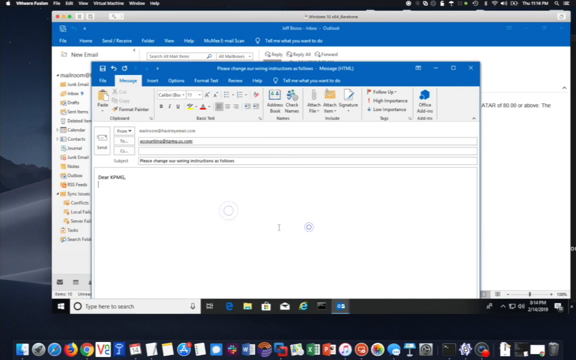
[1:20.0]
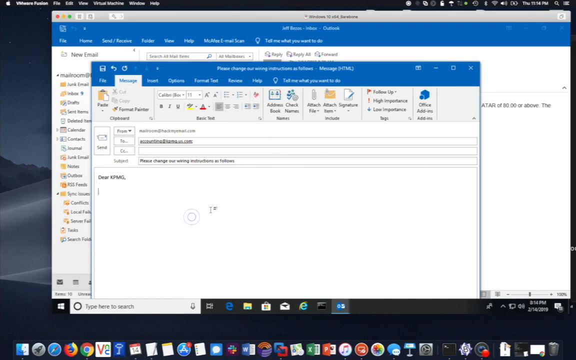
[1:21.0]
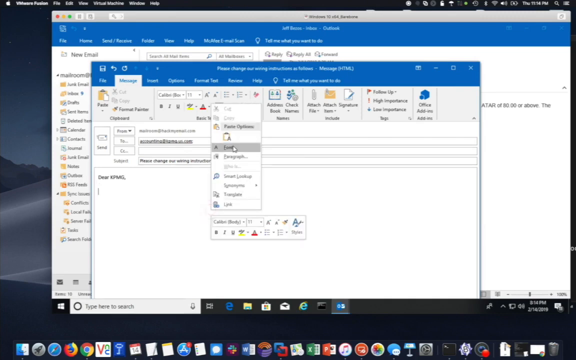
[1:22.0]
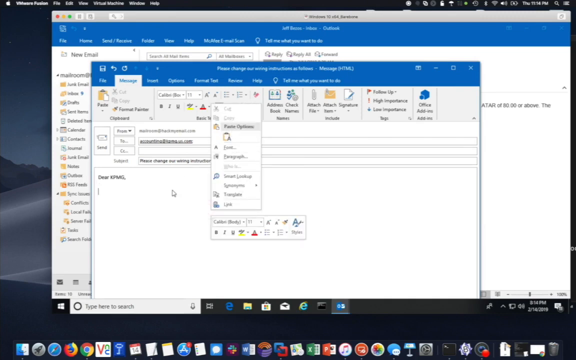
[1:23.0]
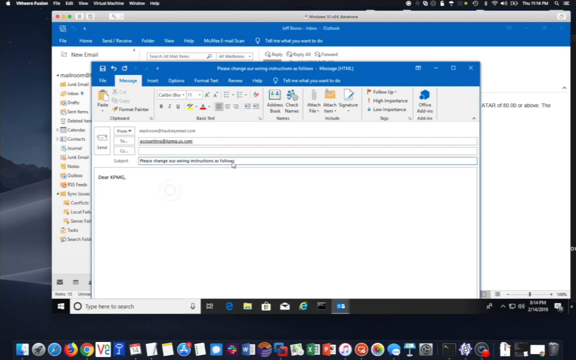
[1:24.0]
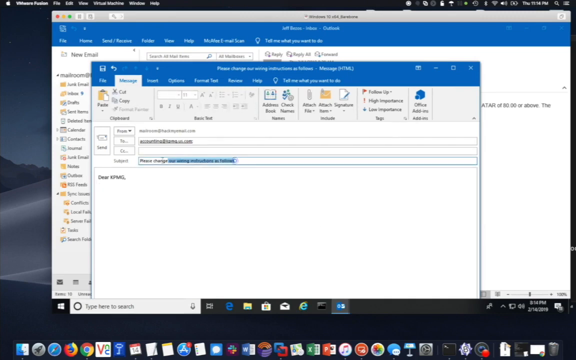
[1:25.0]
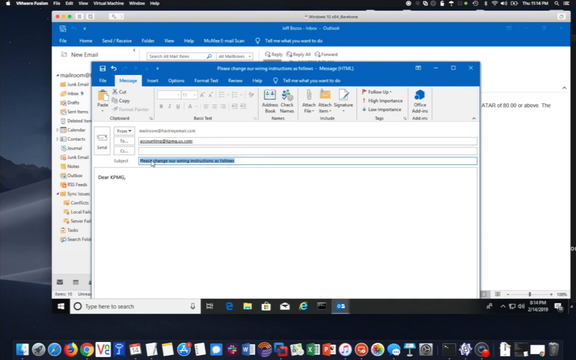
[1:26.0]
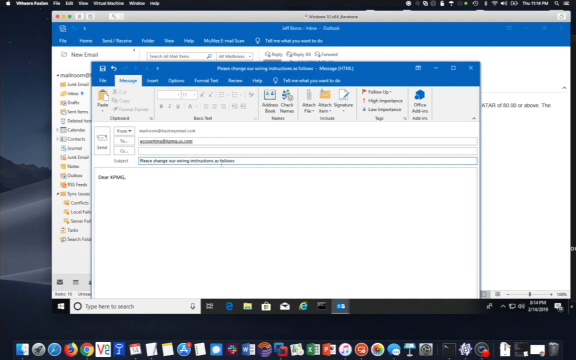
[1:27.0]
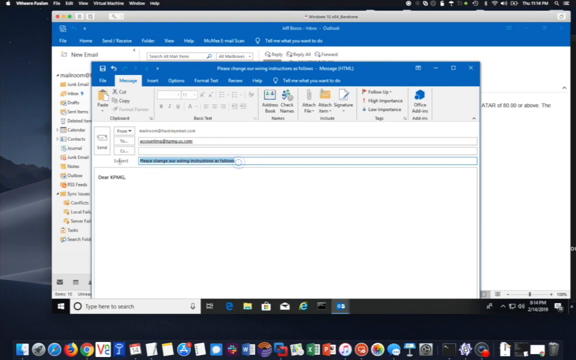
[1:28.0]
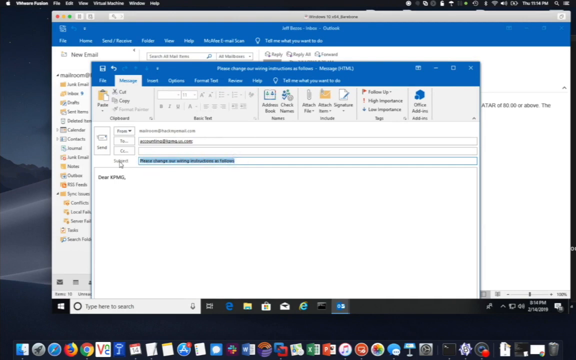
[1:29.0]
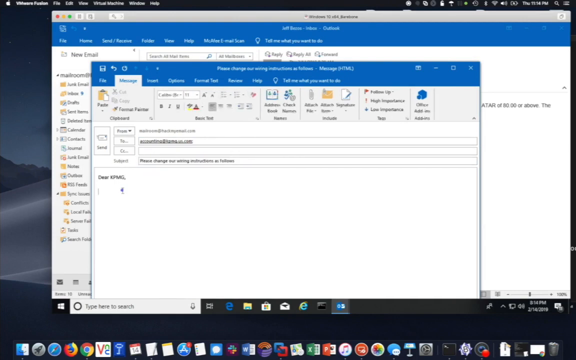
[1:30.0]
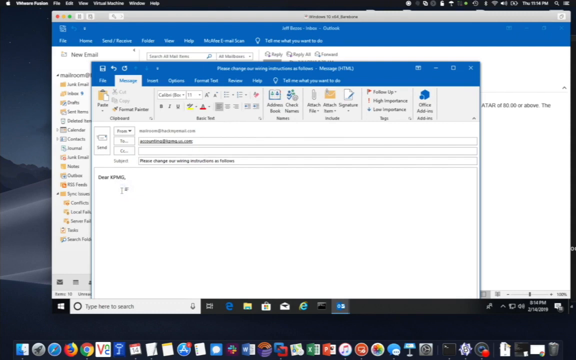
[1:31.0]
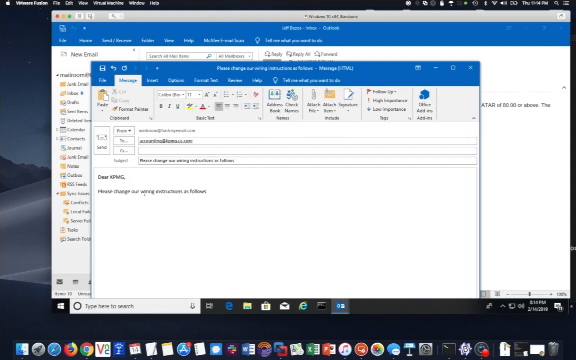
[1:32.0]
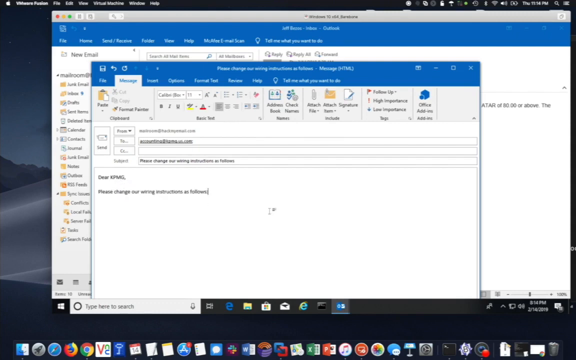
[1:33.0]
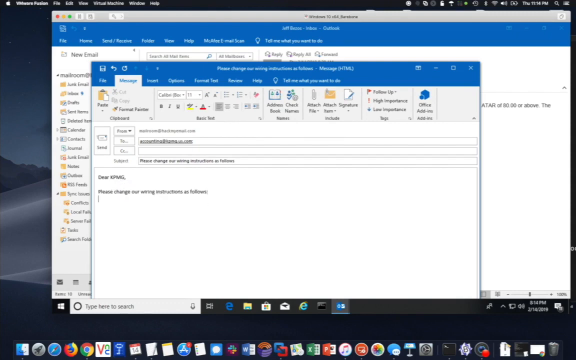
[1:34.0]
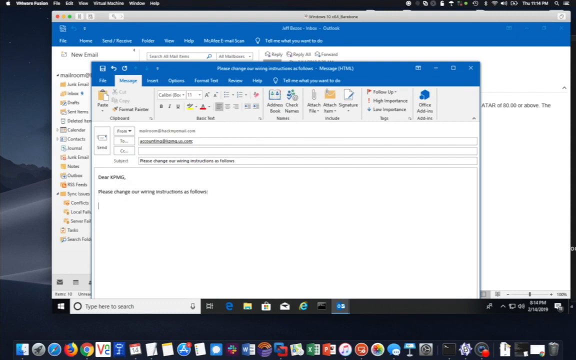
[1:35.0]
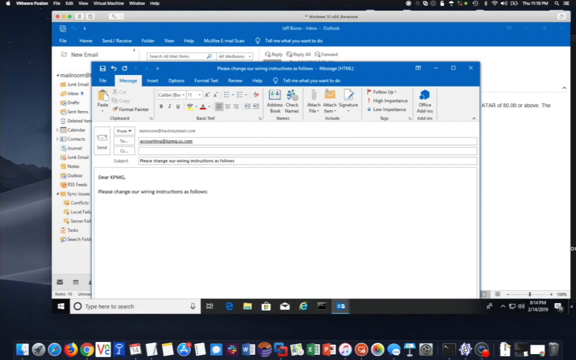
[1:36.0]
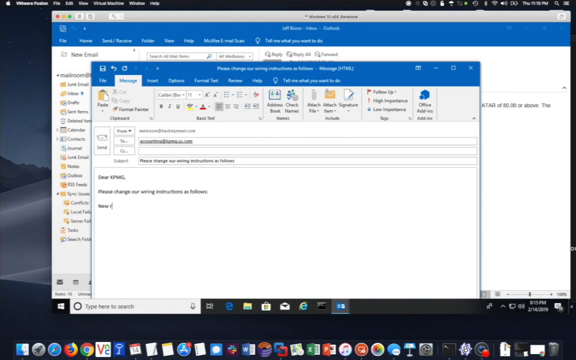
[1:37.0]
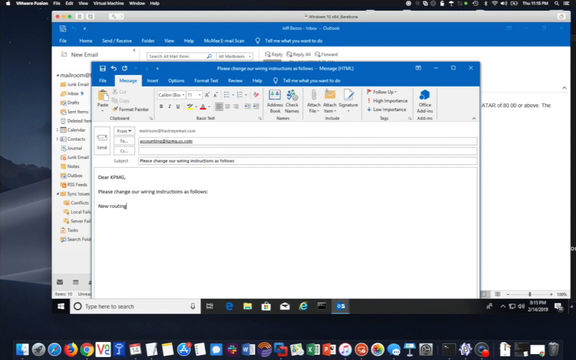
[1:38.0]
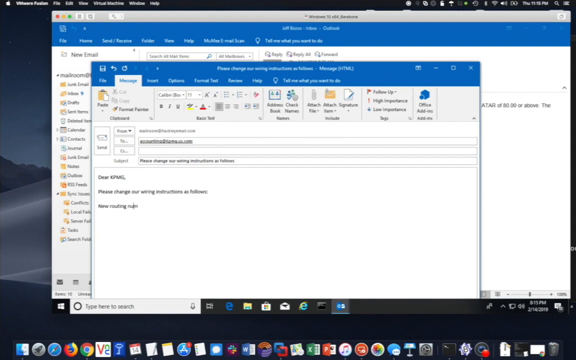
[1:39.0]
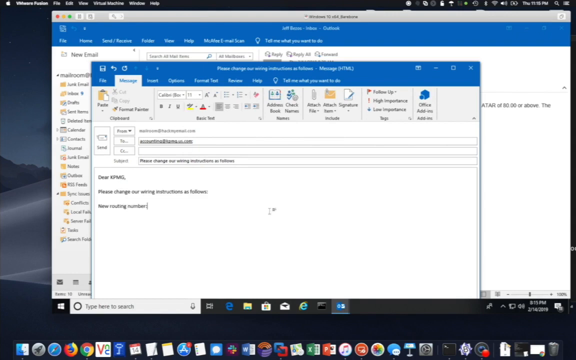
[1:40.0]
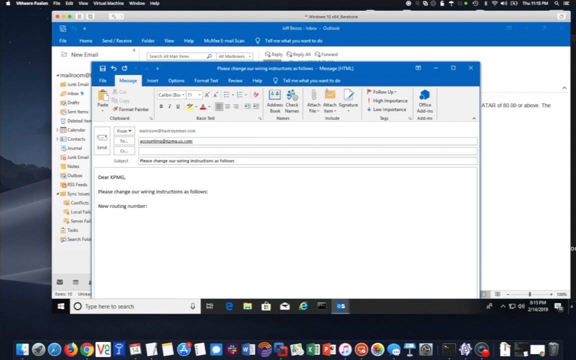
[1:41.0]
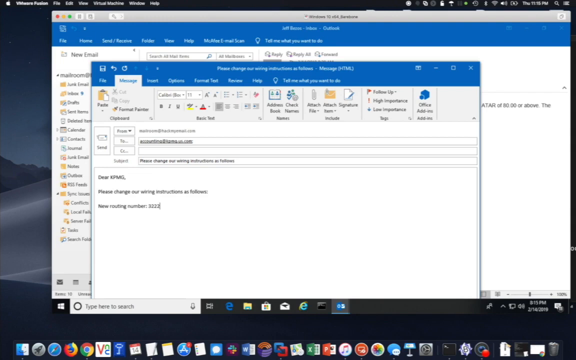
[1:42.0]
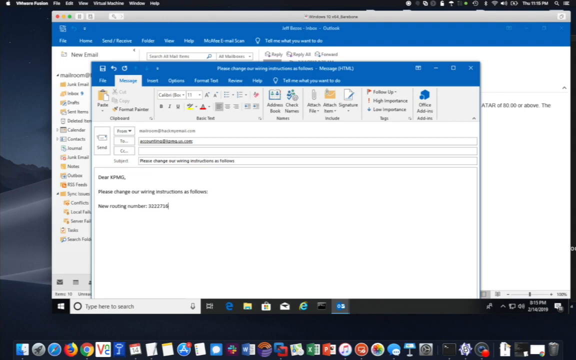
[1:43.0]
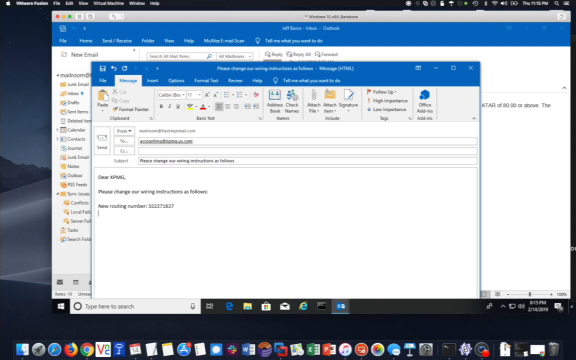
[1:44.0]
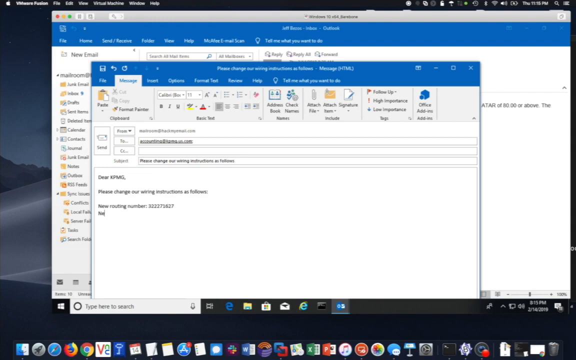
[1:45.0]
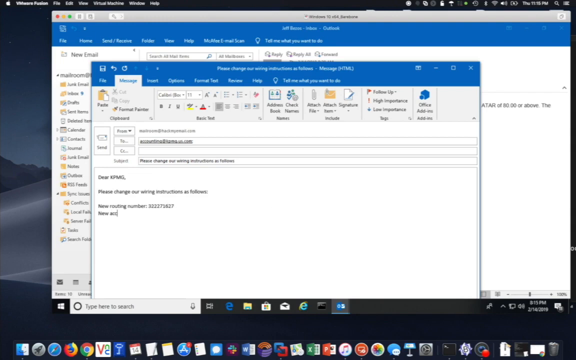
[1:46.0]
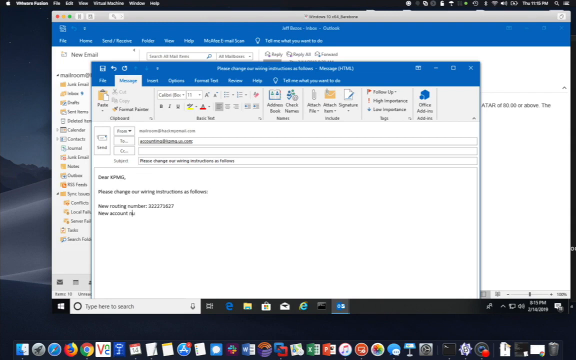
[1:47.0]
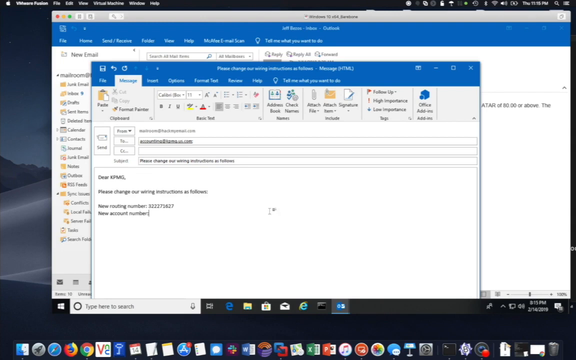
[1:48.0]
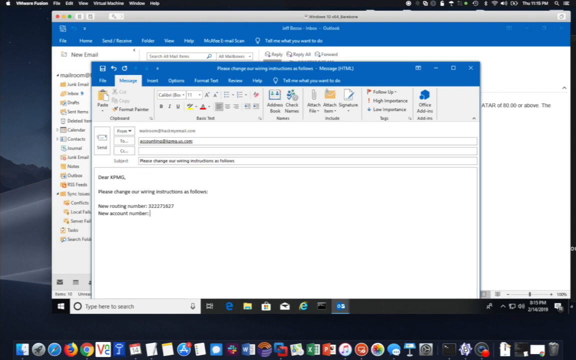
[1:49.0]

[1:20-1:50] Two pages are open on a computer screen: an email homepage and a message page for writing an email. Someone selects items from a drop-down menu and appears to click a clipboard icon in the middle of that menu. They highlight the text in the subject box, and this text is copied into the message text box. They continue typing a message below it. The text is a bit blurry, but the first line looks like "new routing number" followed by a series of numbers, and below that it looks like "new account number" with another series of numbers. The screen is slightly blurry, making some details difficult to read.